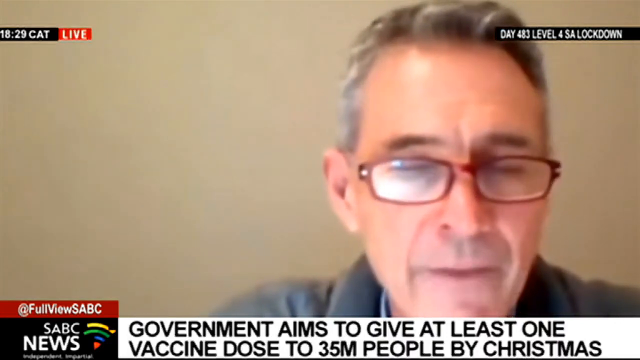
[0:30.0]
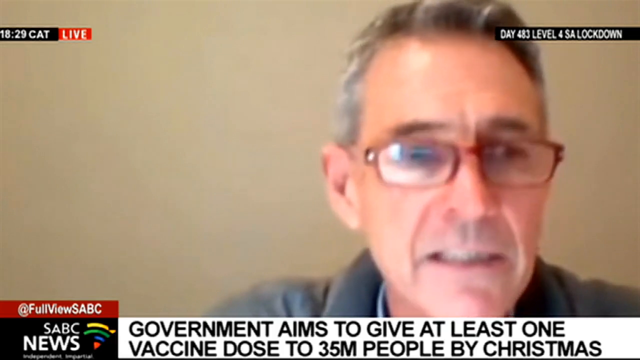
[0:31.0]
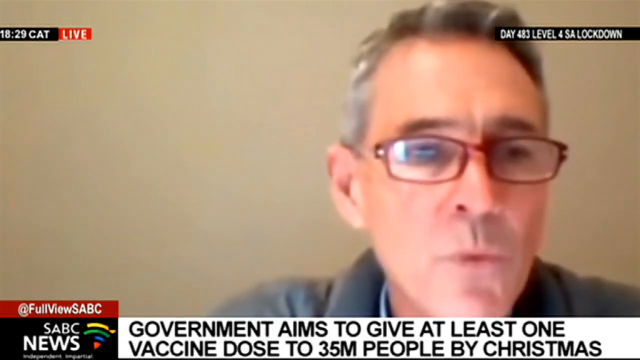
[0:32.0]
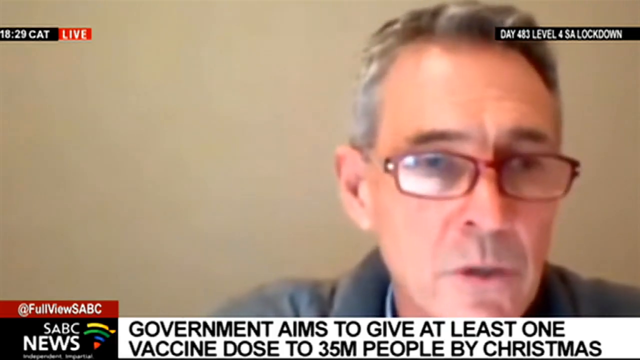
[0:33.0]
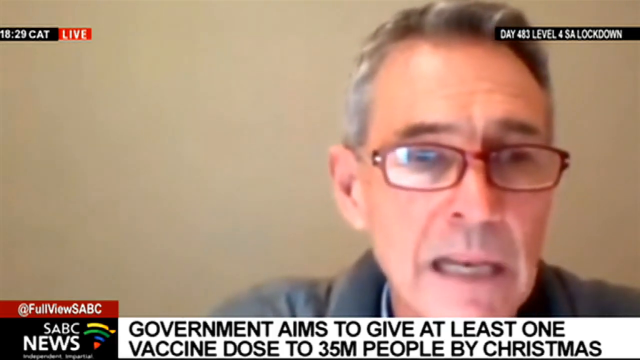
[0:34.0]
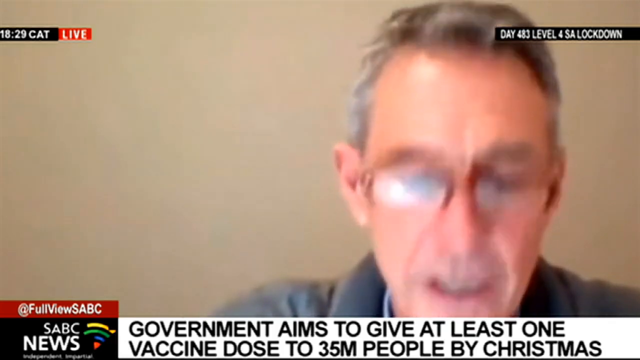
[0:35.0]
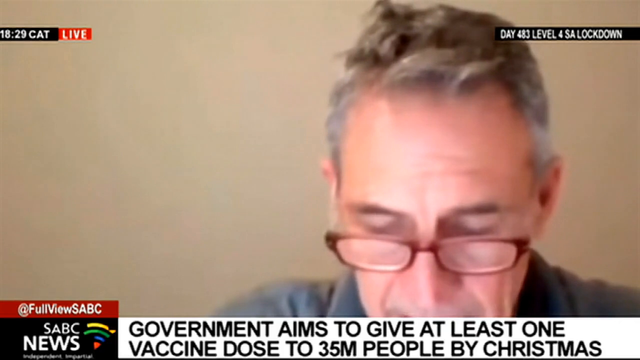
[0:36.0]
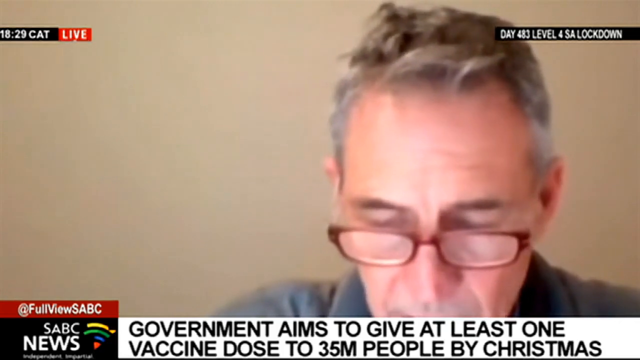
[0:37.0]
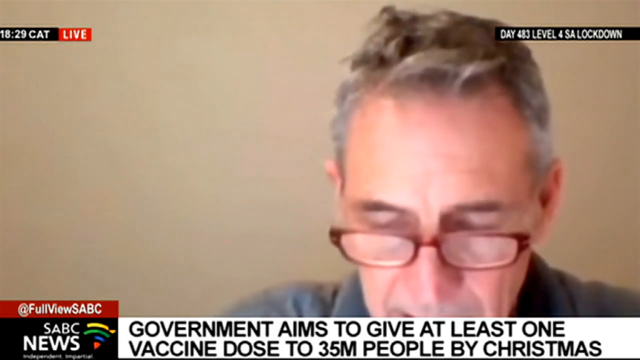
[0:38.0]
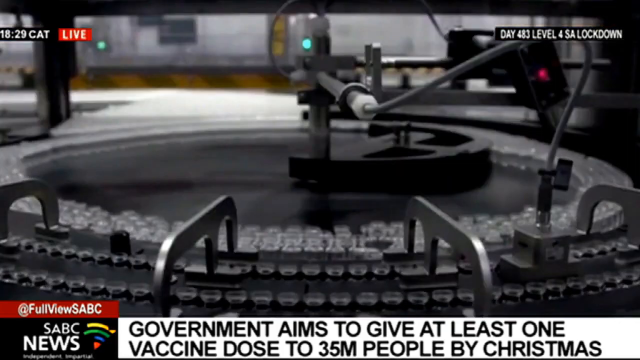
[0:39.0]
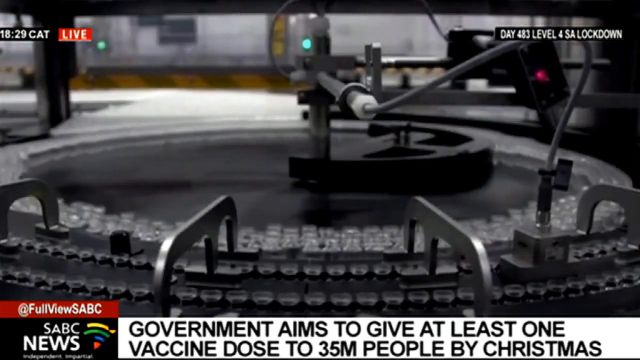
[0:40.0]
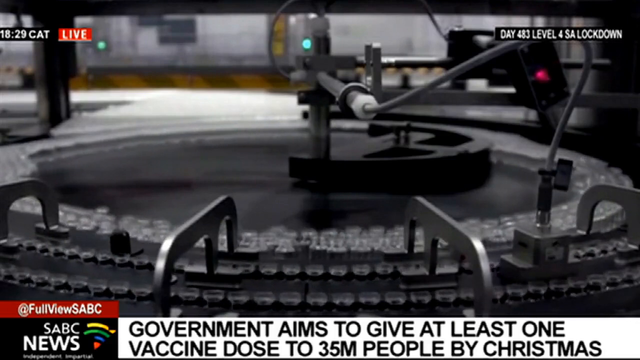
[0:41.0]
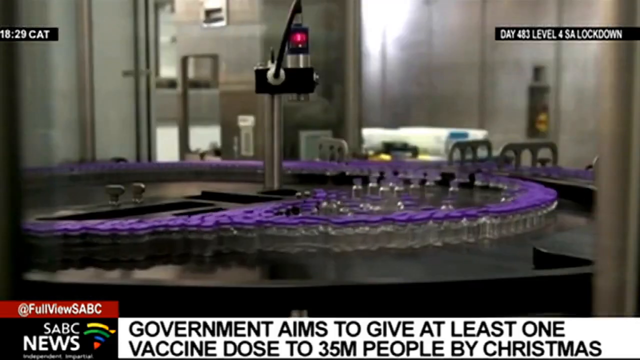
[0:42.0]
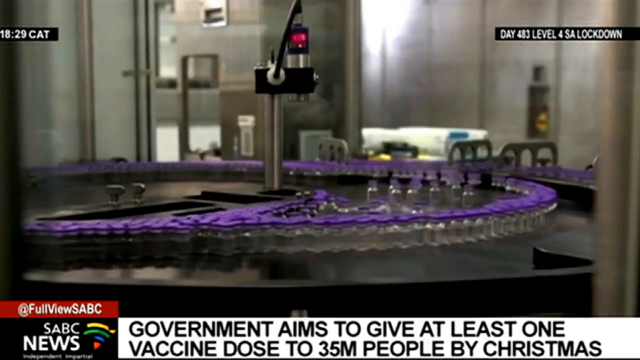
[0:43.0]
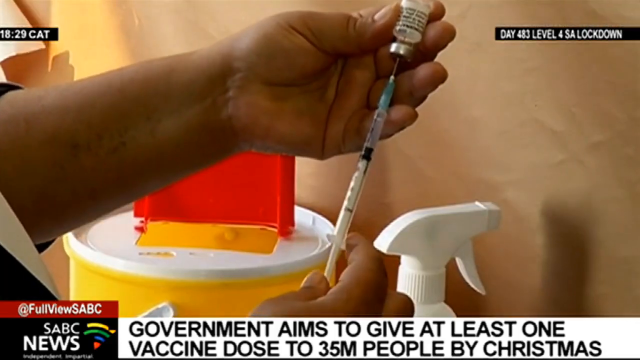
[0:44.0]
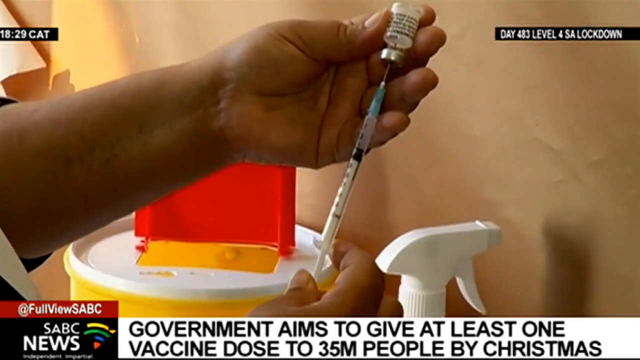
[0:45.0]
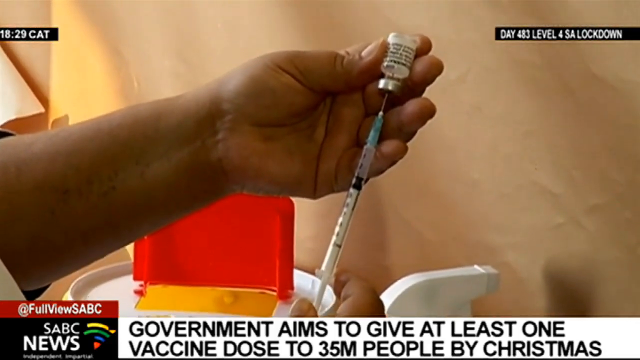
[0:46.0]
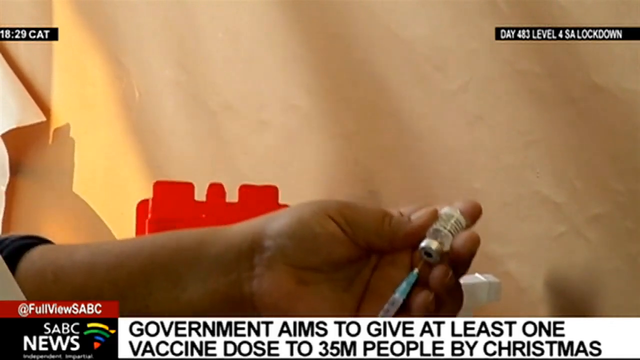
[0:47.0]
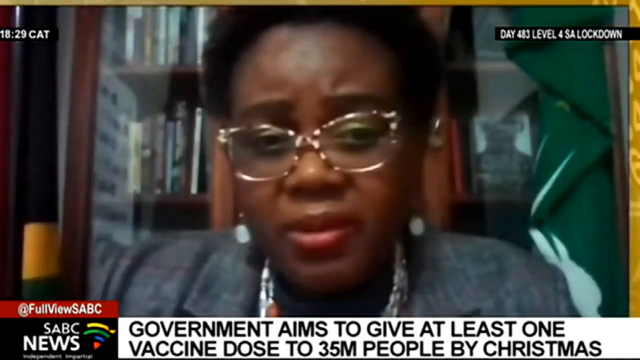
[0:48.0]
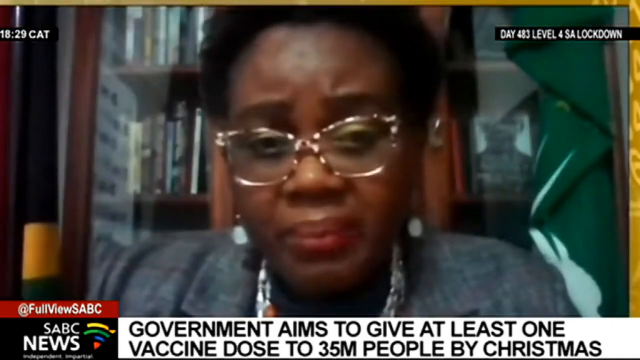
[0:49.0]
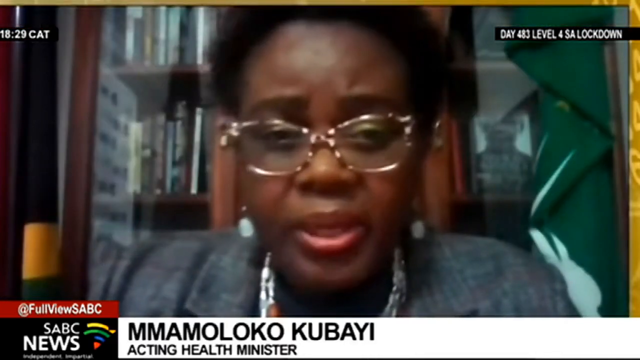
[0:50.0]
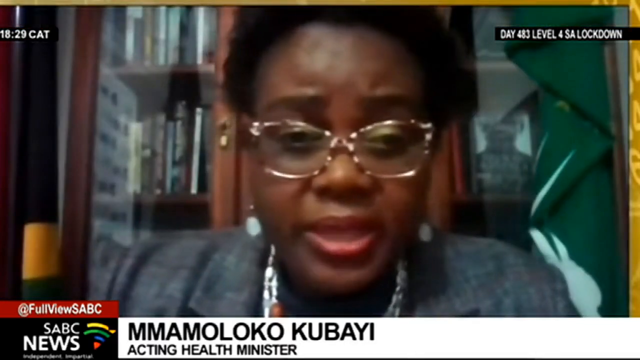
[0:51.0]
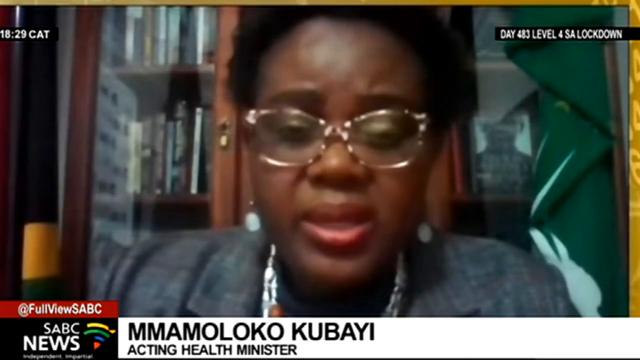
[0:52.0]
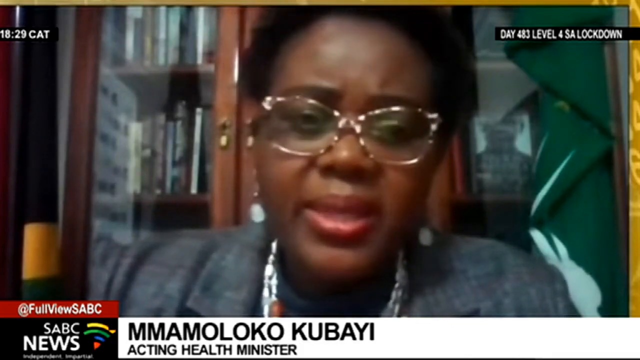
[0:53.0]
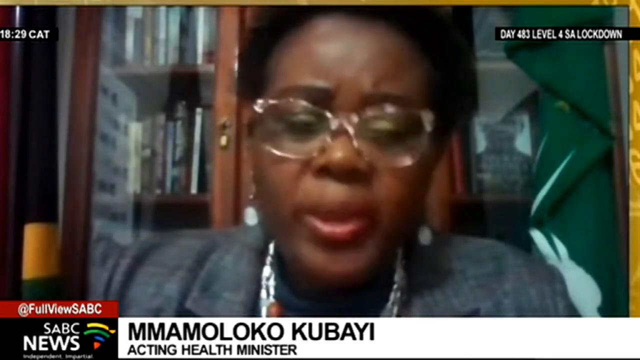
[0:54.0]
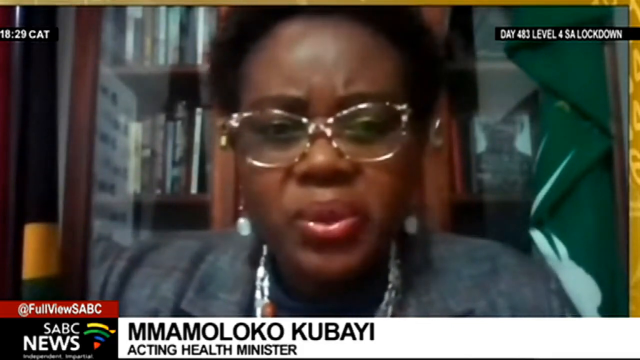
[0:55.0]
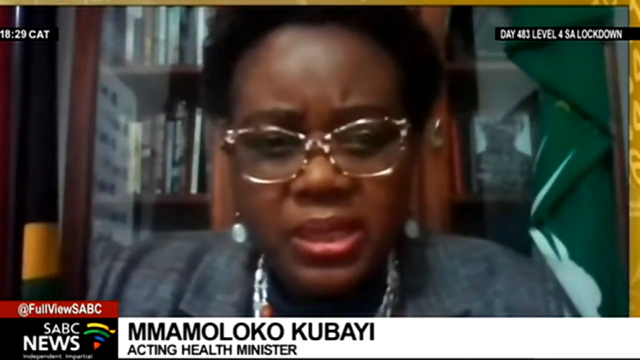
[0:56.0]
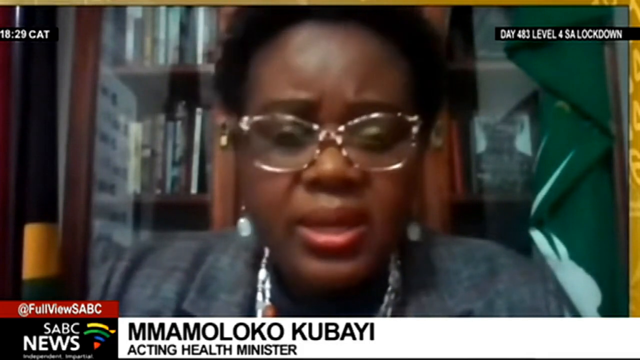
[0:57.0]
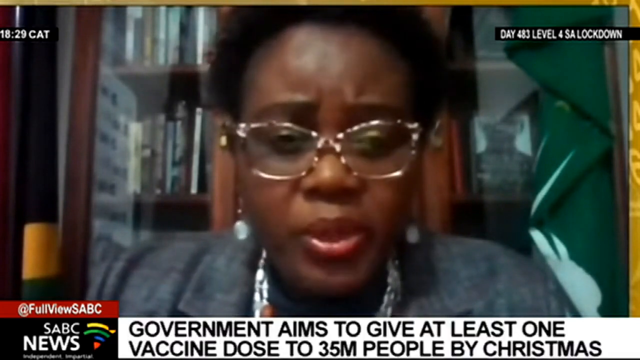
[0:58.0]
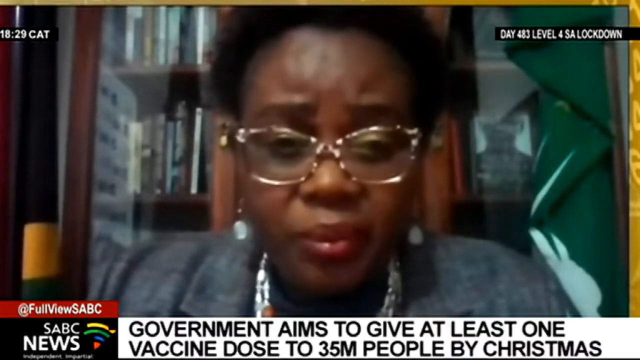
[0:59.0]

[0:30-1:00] The doctor continues speaking on screen, wearing glasses that have slid slightly down his face. The footage then shows what looks like a factory filling glass vaccine bottles topped with purple stoppers. A person takes one of the bottles and uses a needle to draw the vaccine into it. In the background there appears to be a yellow sharps container with a red lid. A woman then appears on screen, with her name and her title, acting health minister, displayed under the video. She talks in front of a large bookcase, most likely from her home.